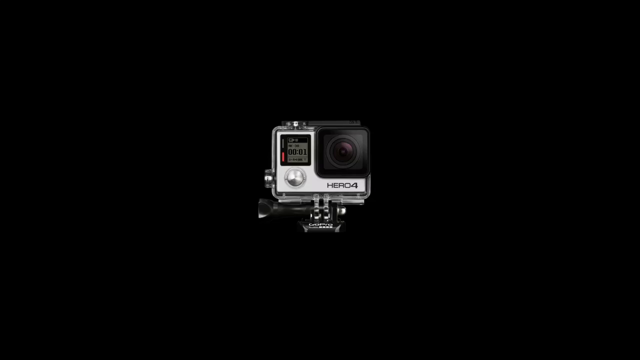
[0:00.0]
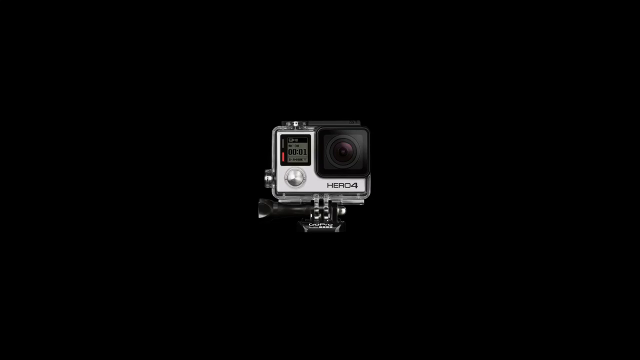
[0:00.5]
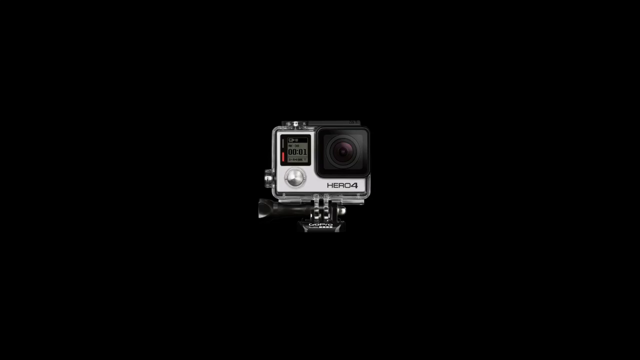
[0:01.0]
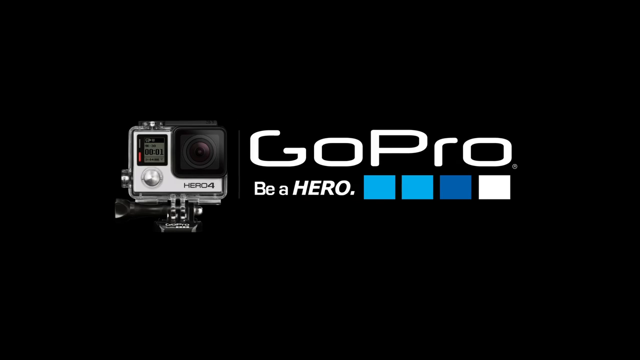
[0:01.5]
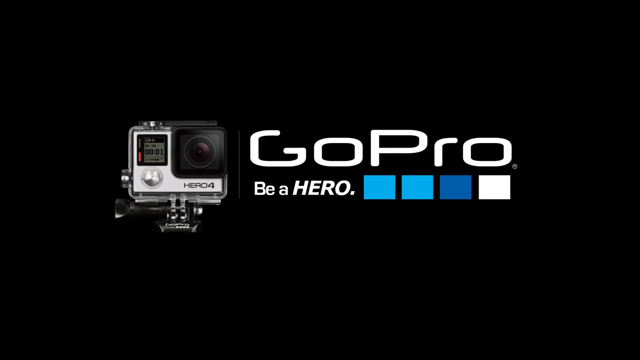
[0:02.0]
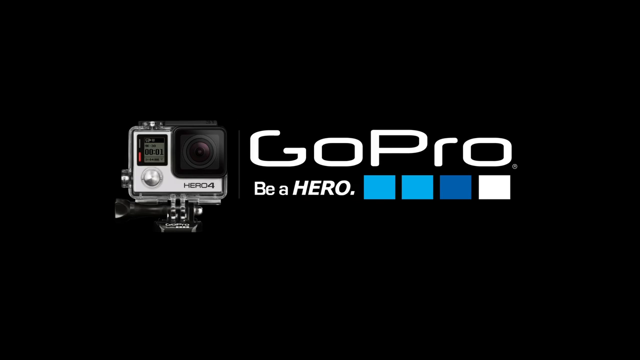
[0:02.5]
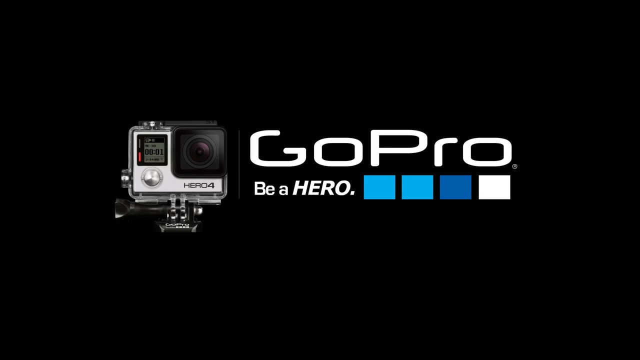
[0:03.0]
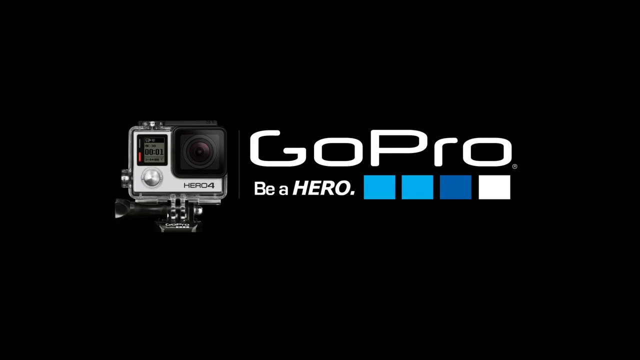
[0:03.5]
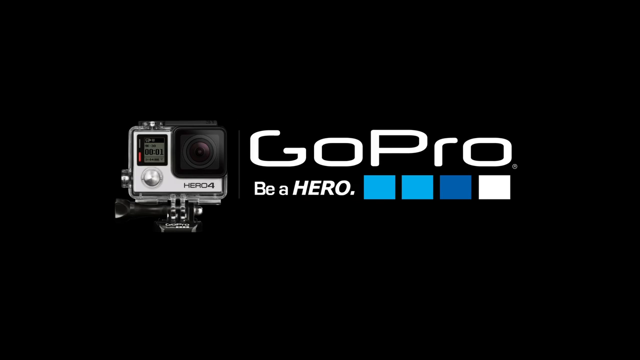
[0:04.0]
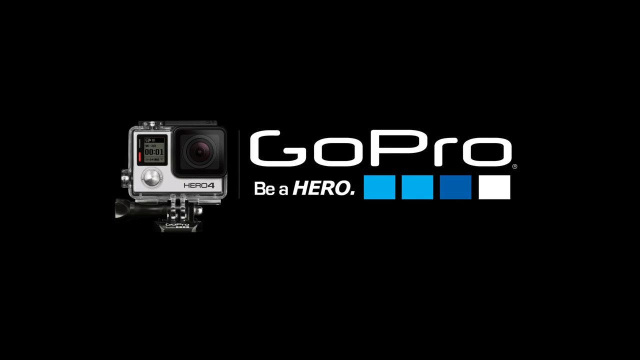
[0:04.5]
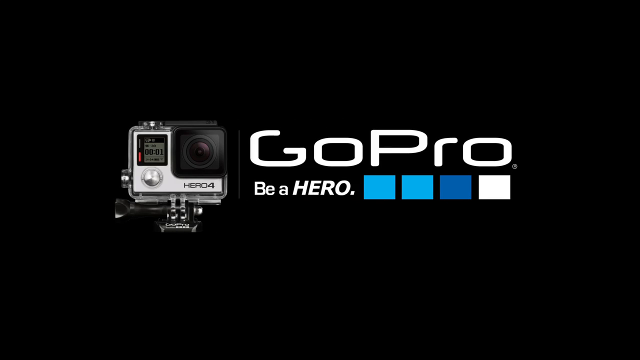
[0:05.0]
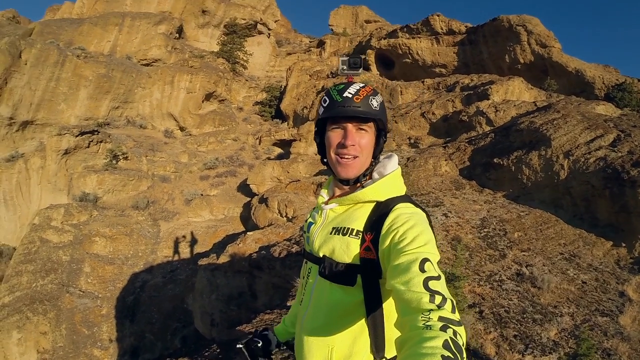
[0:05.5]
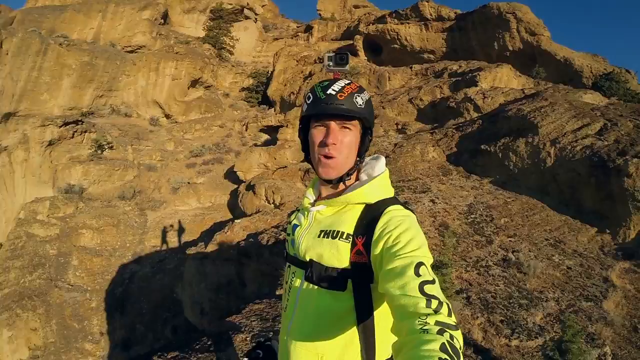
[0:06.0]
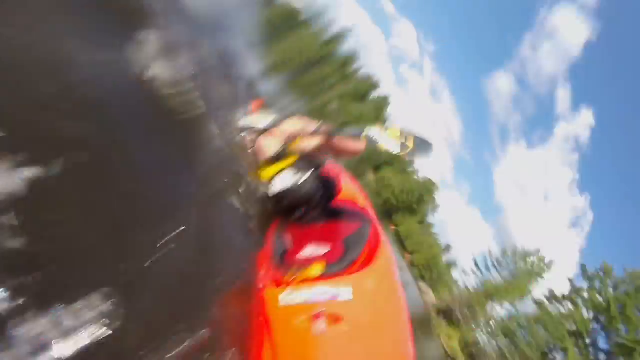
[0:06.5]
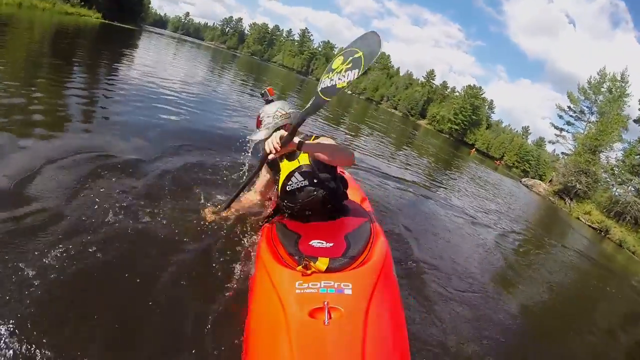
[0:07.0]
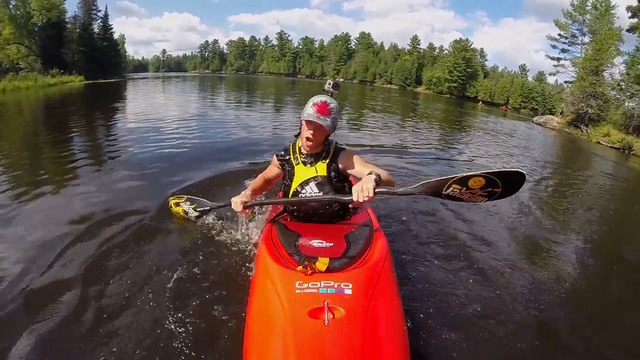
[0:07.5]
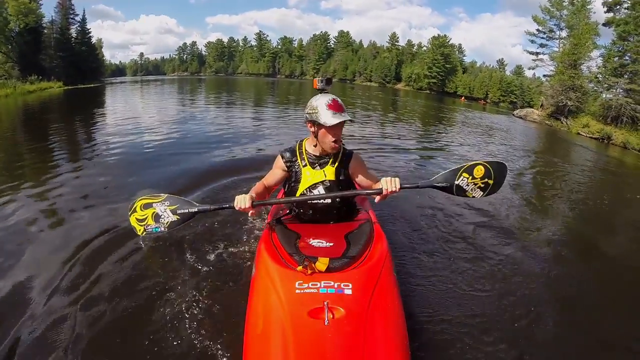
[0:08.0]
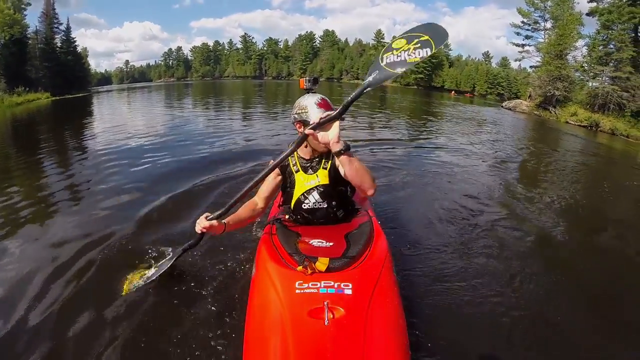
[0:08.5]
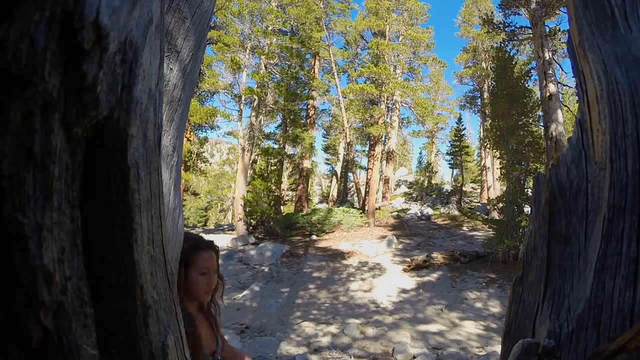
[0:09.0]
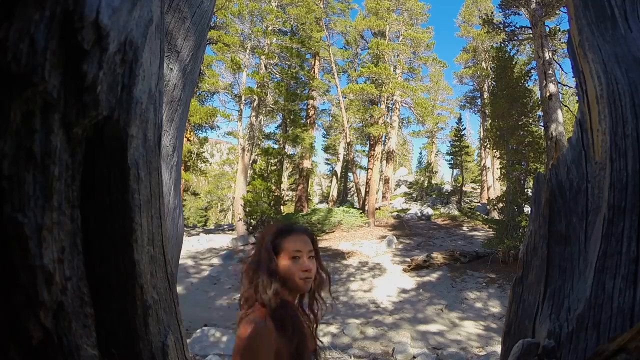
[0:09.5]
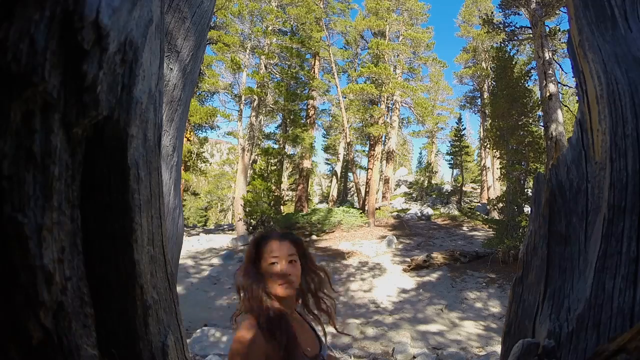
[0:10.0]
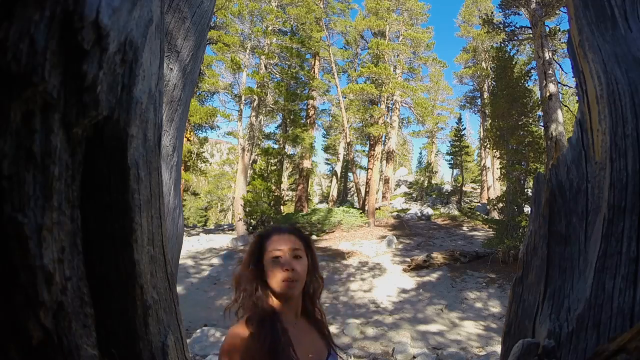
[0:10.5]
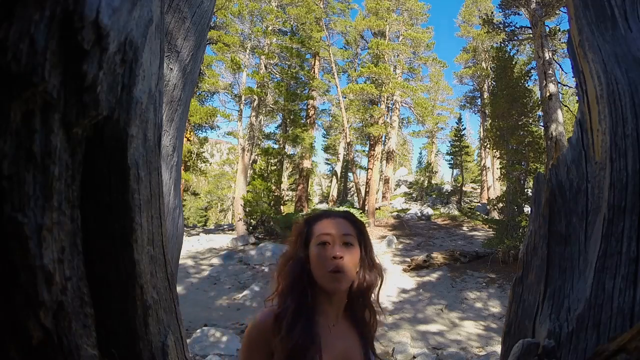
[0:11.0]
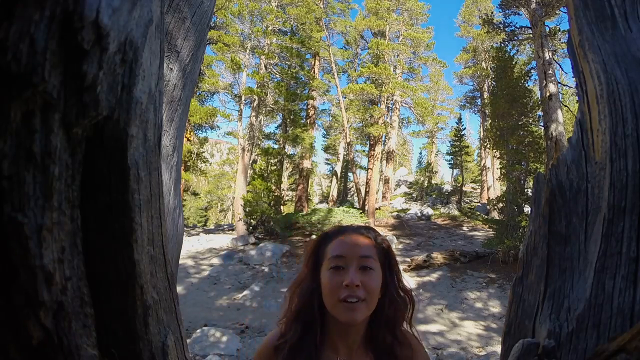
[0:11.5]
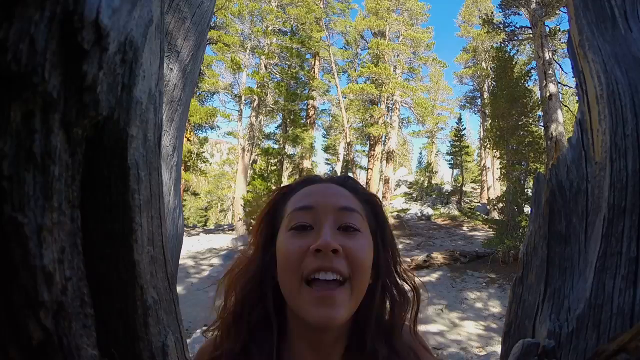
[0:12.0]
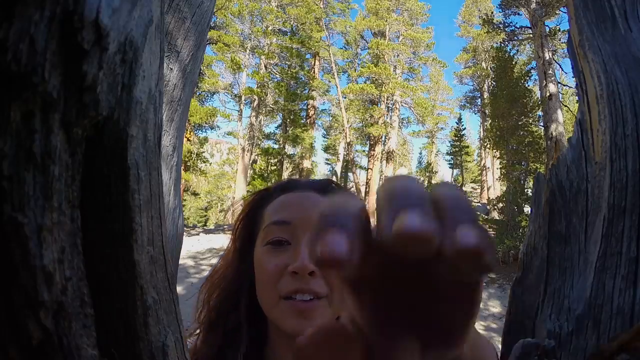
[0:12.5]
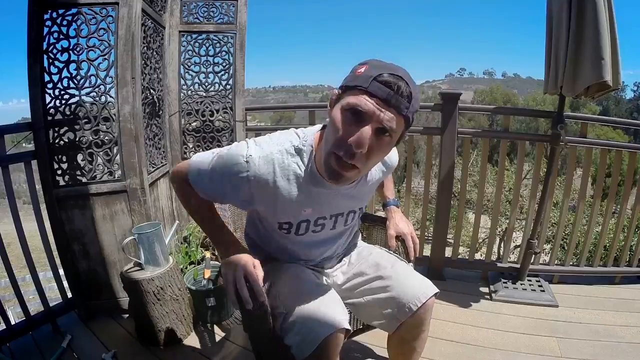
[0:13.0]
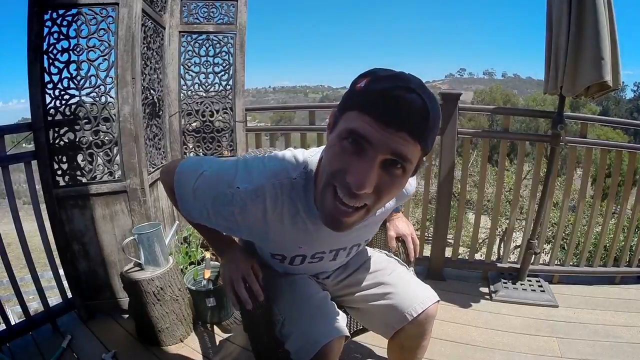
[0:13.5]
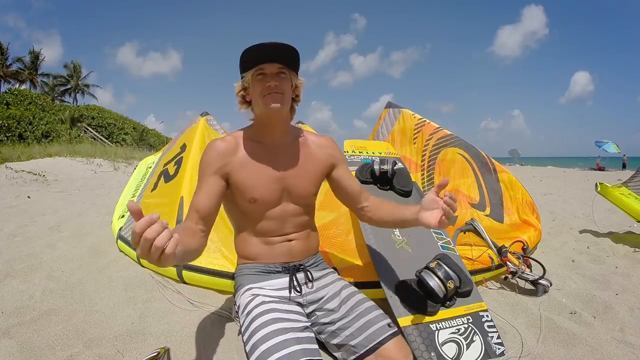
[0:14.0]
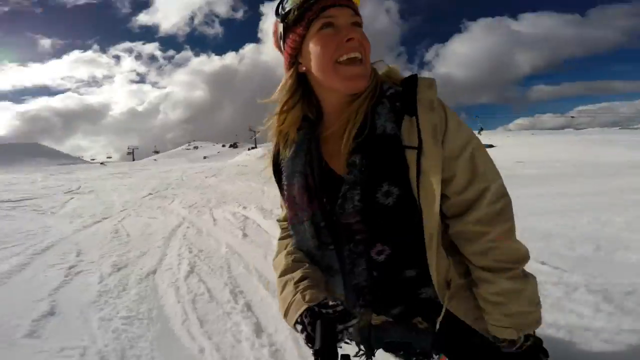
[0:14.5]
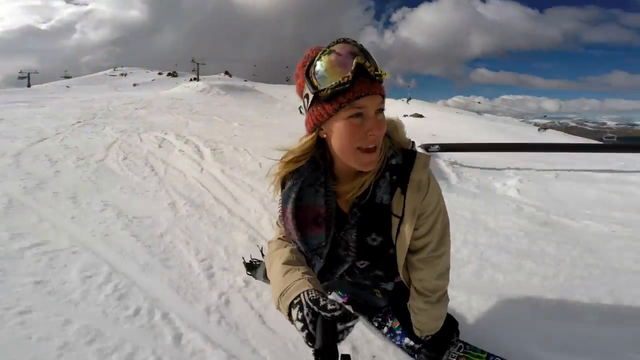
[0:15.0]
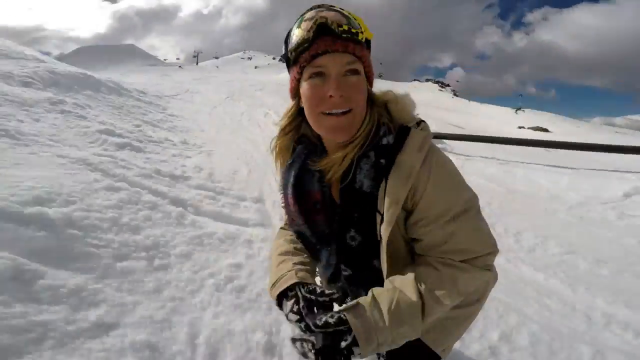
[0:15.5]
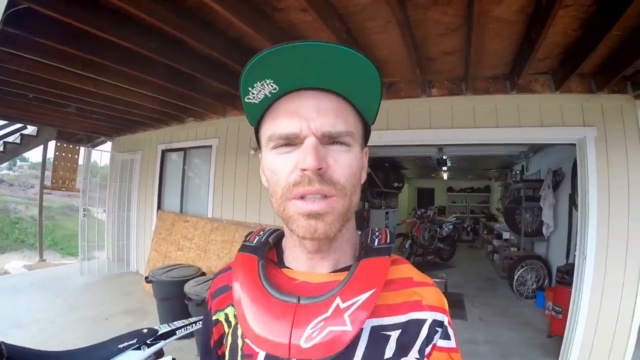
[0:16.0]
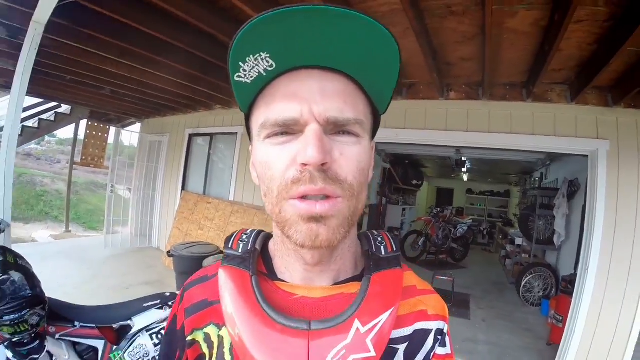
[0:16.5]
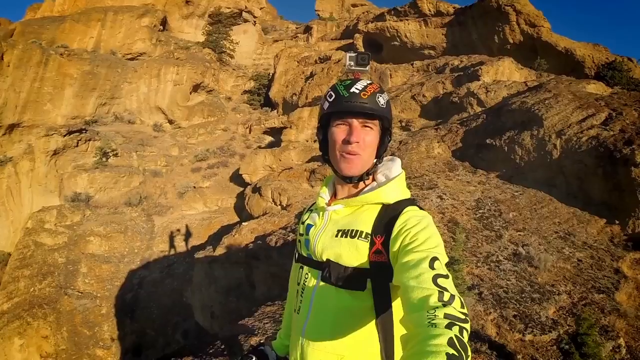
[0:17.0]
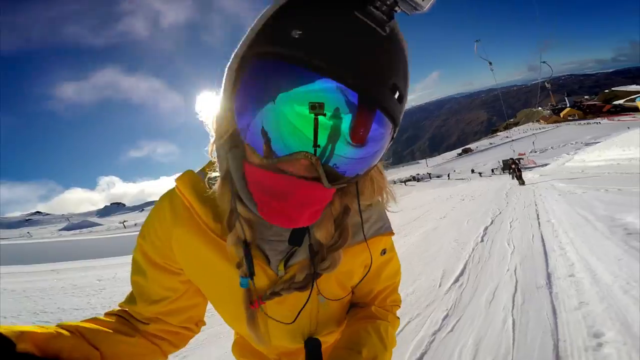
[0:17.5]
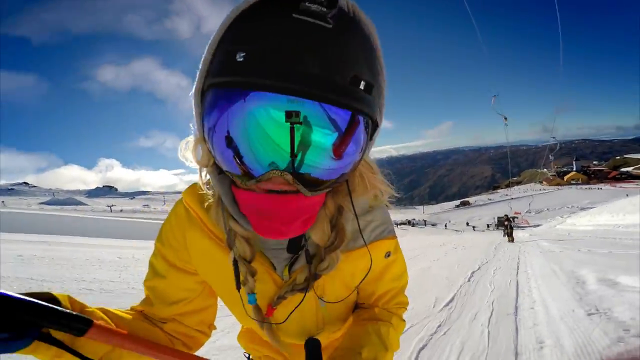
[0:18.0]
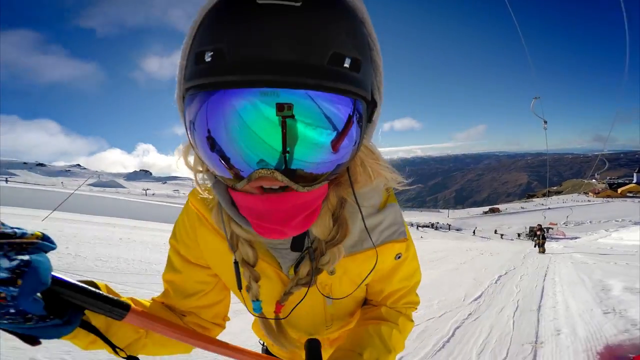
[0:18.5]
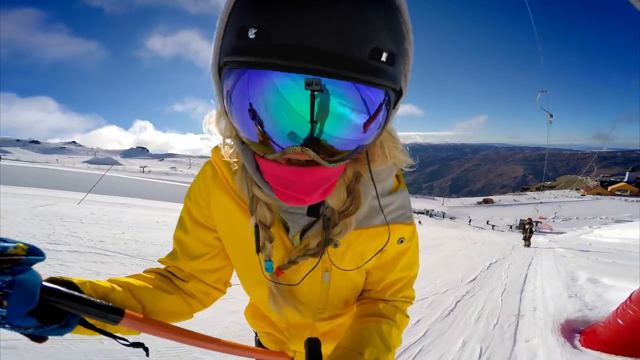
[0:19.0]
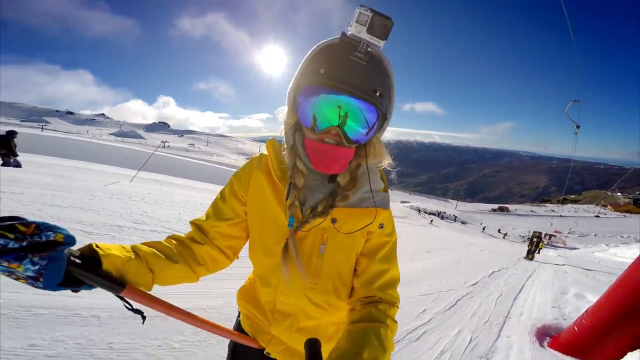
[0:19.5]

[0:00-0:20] This is a GoPro tutorial channel trailer, apparently for the Hero 4, and it seems to involve someone skydiving. First the camera pans to the Hero 4, a very small camera. The GoPro logo appears with the slogan "GoPro, be a hero," with light blue and dark blue squares under the logo. A guy wearing a neon jacket and a backpack looks like he is skydiving, and someone is recording him; in the reflection the skydiver can be seen wearing a helmet, apparently with the GoPro Hero 4 attached to it. The scene suddenly transitions to him paddling in a river, and the camera seems to have just come out of the water. He has a boat with a GoPro logo and wears what looks like an Adidas life jacket, and the paddle looks like it is a Jackson. Next, apparently the GoPro Hero 4 camera is inside a tree, recording a girl passing by.